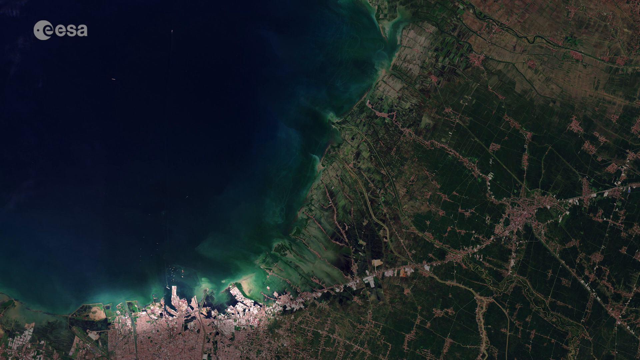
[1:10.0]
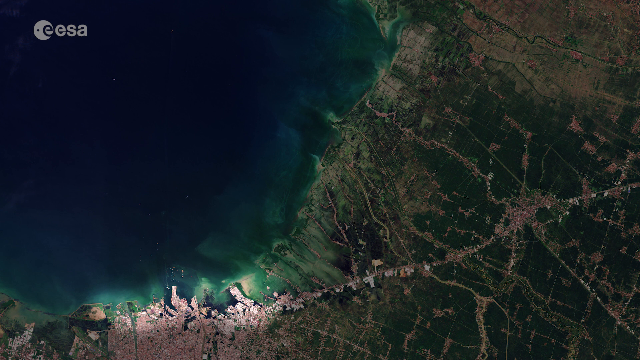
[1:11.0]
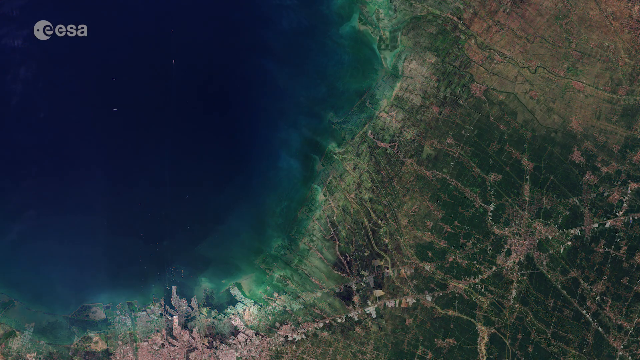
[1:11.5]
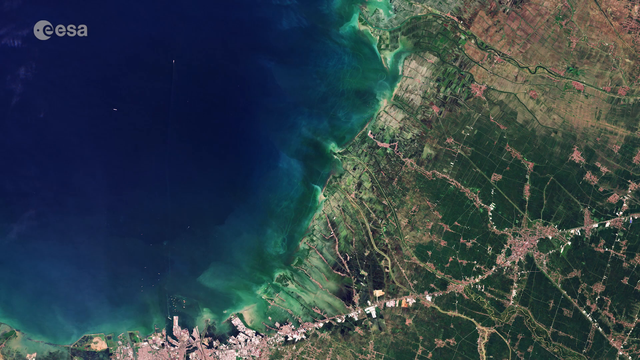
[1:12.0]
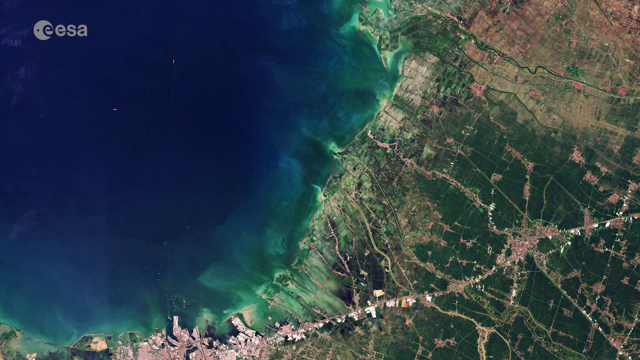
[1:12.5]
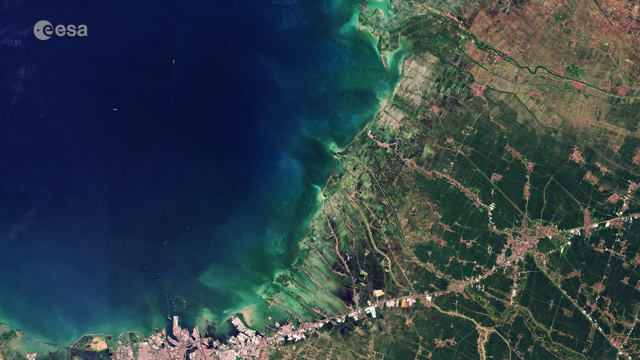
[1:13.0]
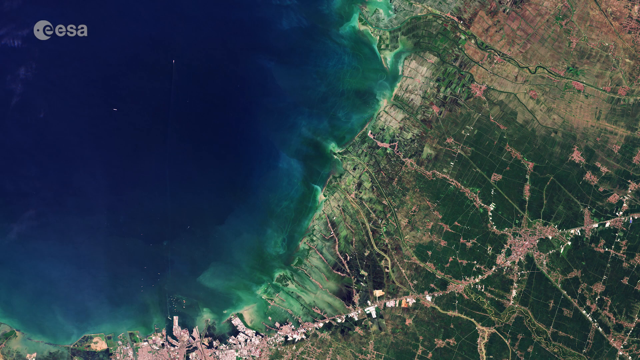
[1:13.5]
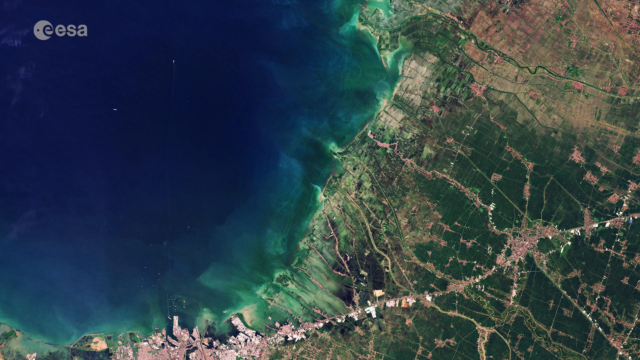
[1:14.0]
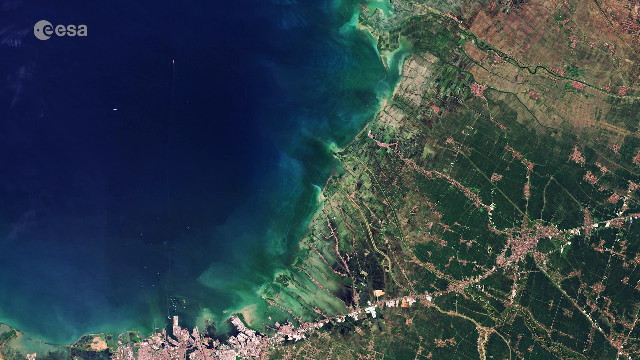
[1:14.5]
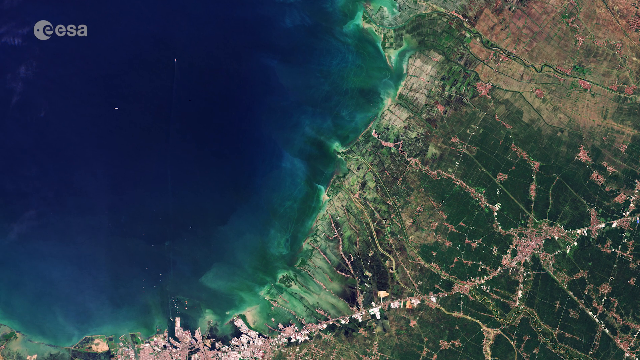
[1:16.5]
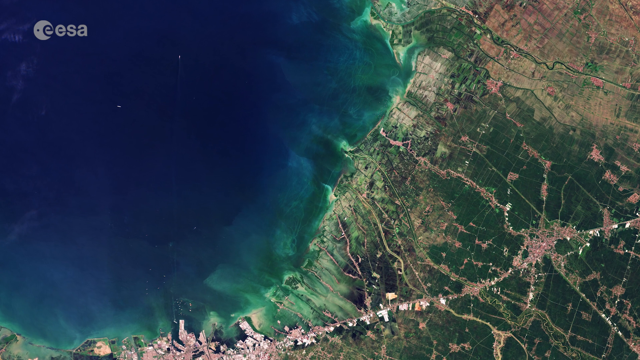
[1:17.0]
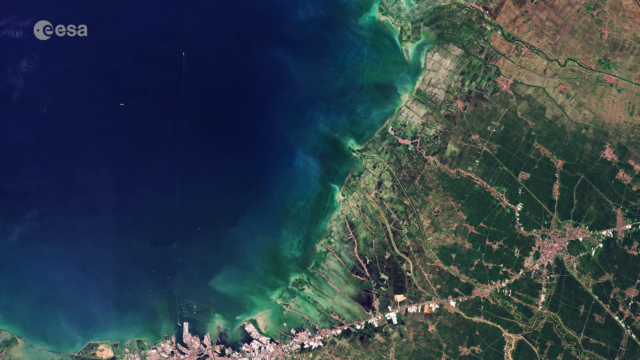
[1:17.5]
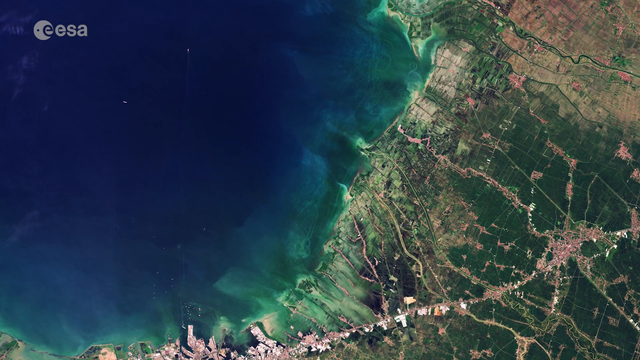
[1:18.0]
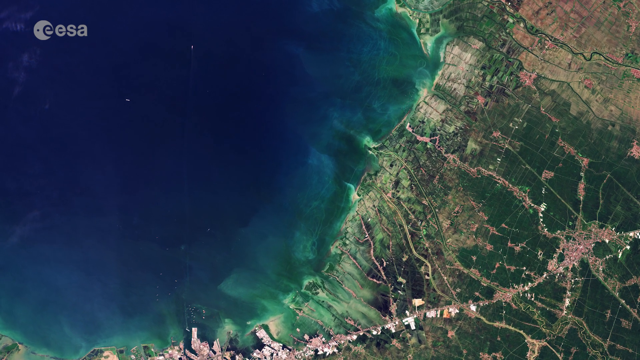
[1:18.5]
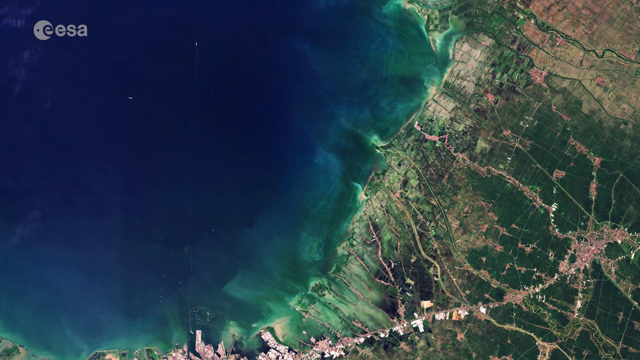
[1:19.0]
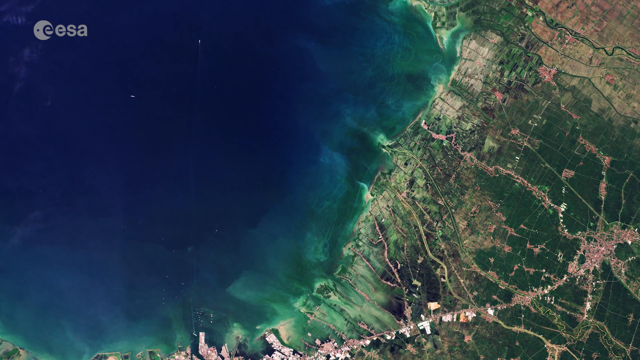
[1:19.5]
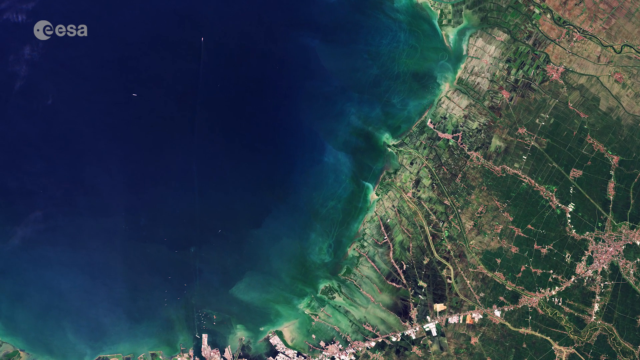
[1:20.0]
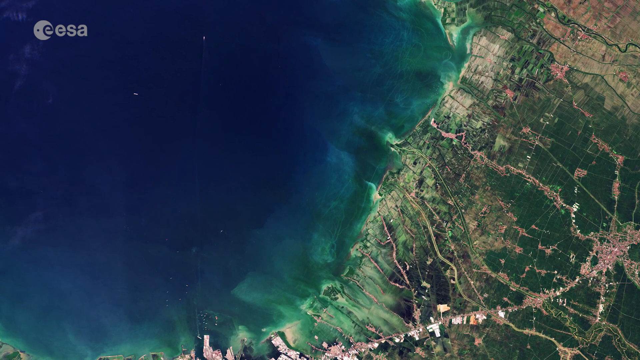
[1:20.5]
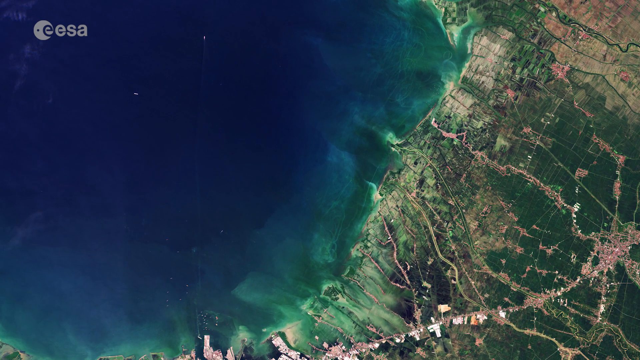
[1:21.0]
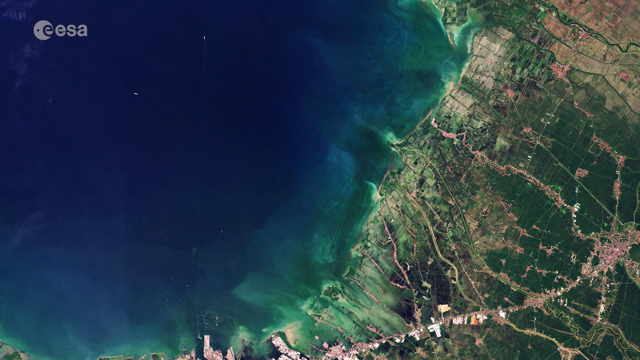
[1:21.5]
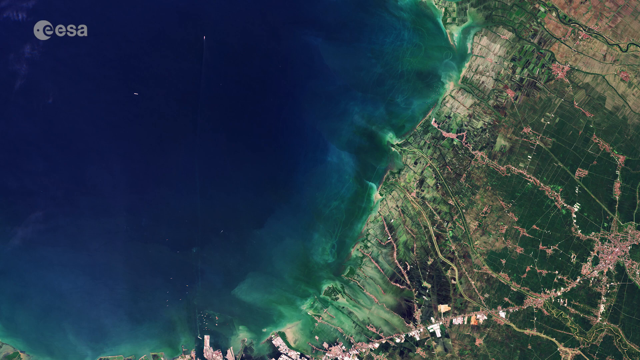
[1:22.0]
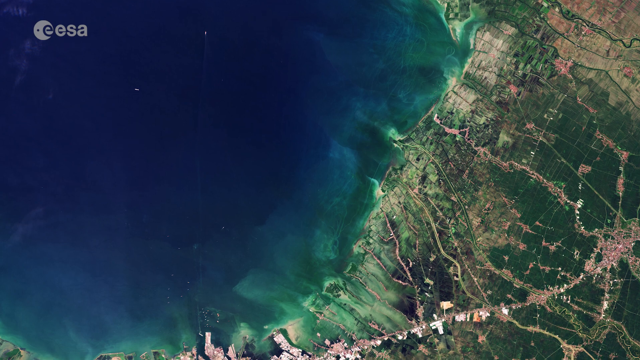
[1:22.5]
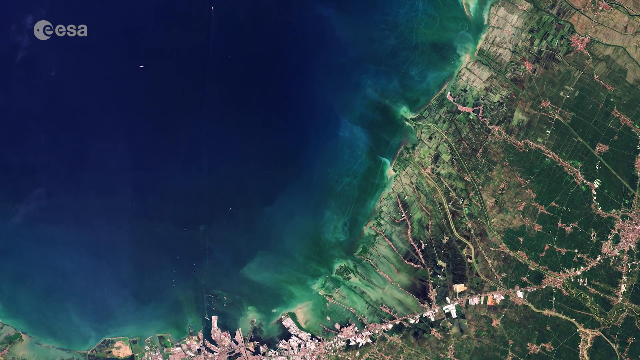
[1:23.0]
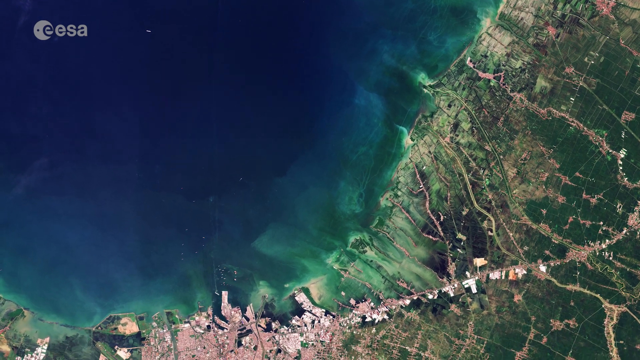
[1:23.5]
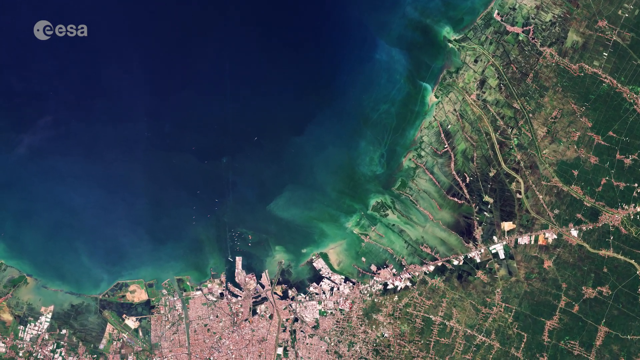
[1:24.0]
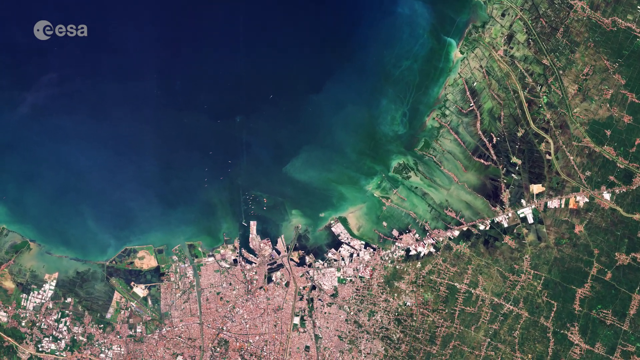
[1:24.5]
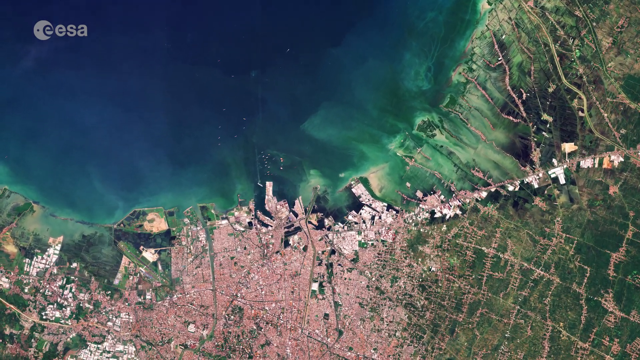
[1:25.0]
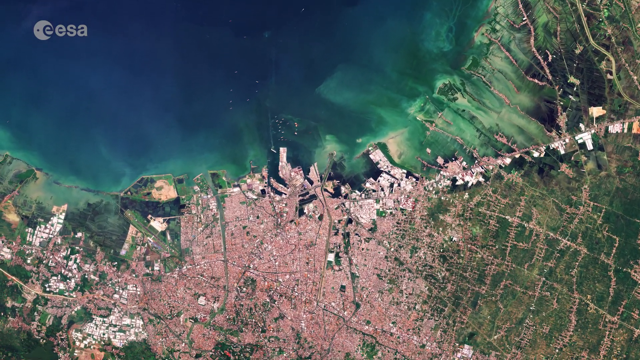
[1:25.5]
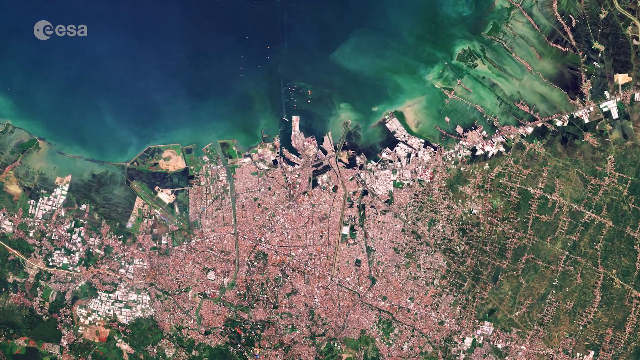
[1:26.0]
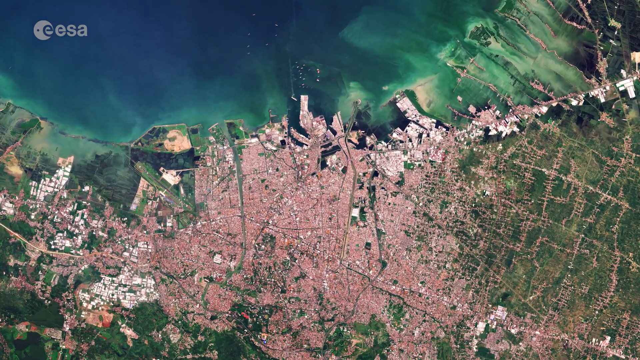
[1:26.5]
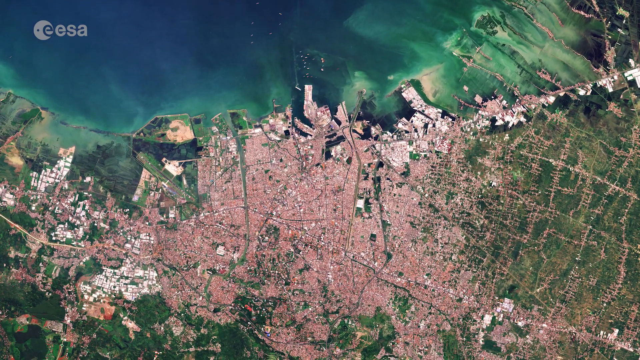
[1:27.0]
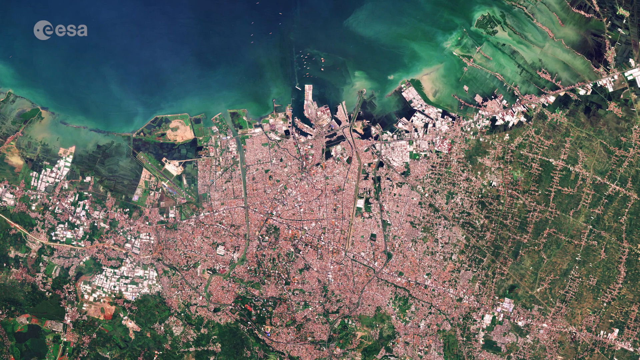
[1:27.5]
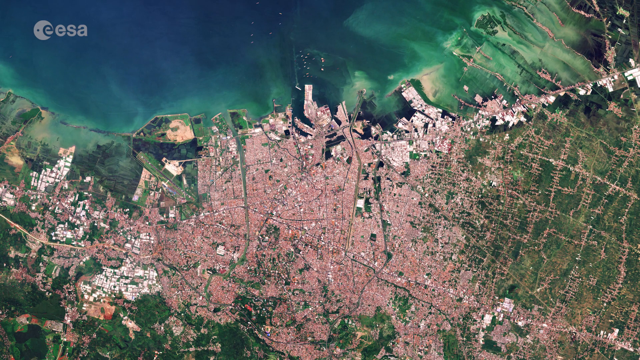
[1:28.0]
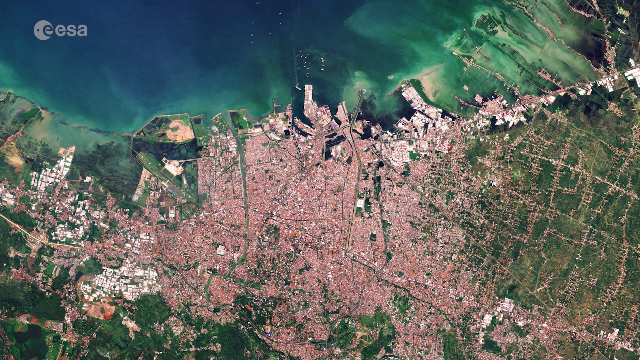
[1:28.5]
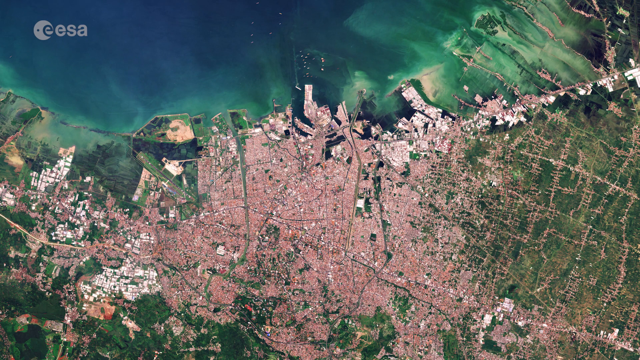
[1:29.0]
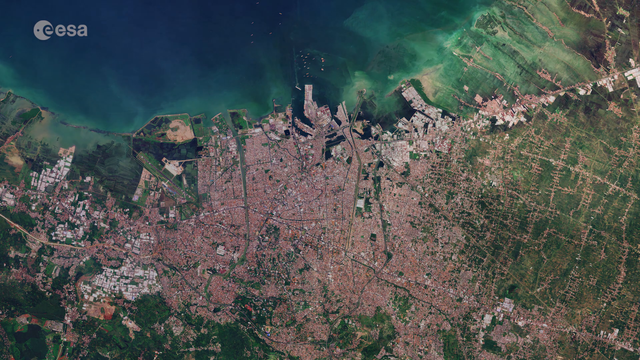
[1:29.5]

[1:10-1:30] A highlighted area shows the brown, uneven edge of Semarang right next to the water. The water curves and is dark blue, then a lightish blue-green, while the rest of the area is sort of darkened. The camera pans to a different section showing a larger part of Semarang, then zooms in a little more, sort of pointing to the water, and then zooms in toward the brownish landmass. It zooms back to show a small area of land filled with brown uneven squares and rectangles, white squares and some orange, with dark green areas indicating some highly developed areas of Semarang, a city along the sea with lots of land adjacent to it.